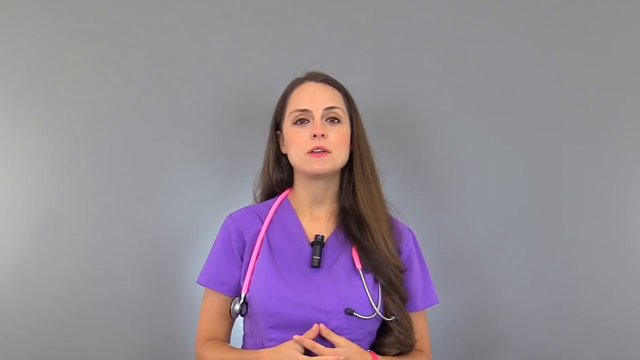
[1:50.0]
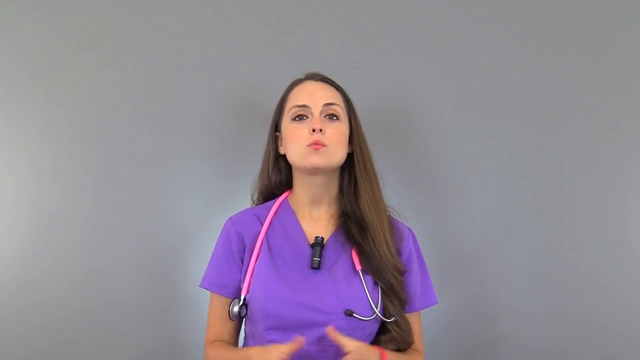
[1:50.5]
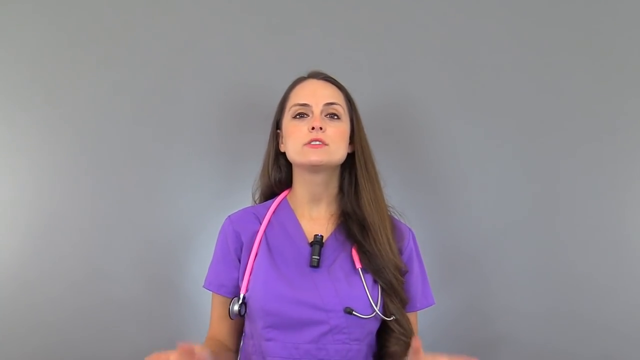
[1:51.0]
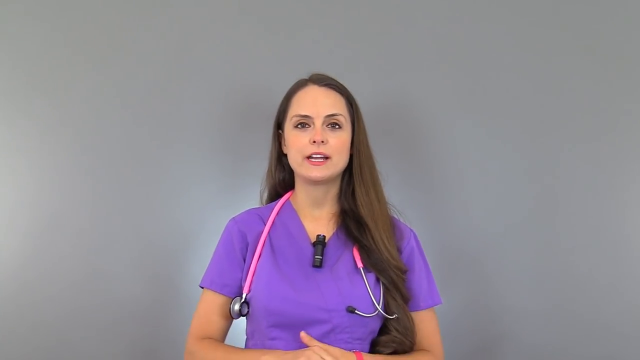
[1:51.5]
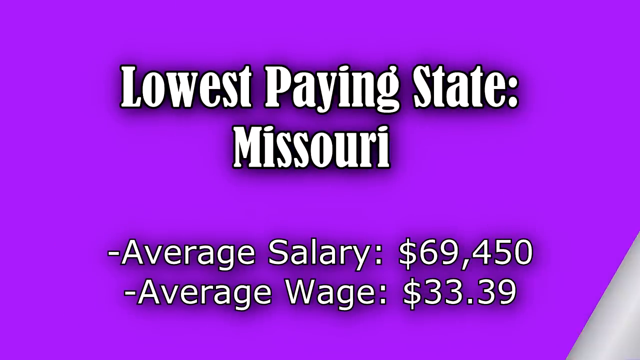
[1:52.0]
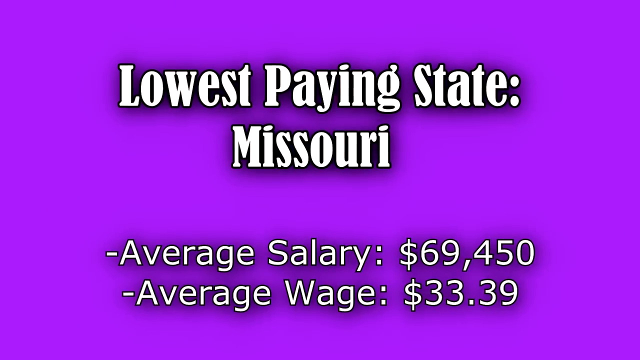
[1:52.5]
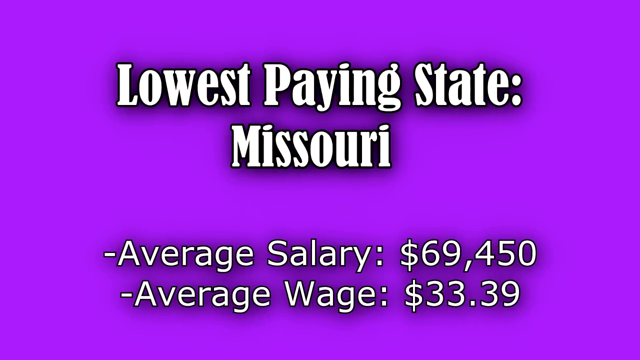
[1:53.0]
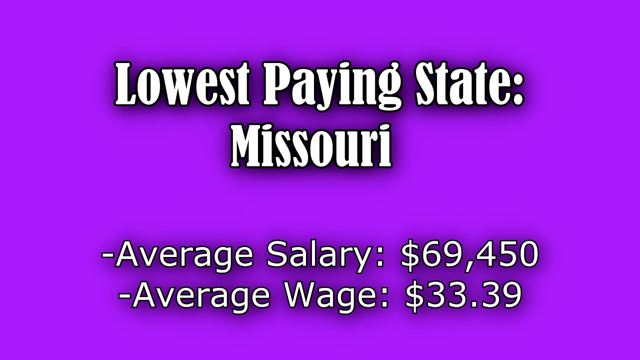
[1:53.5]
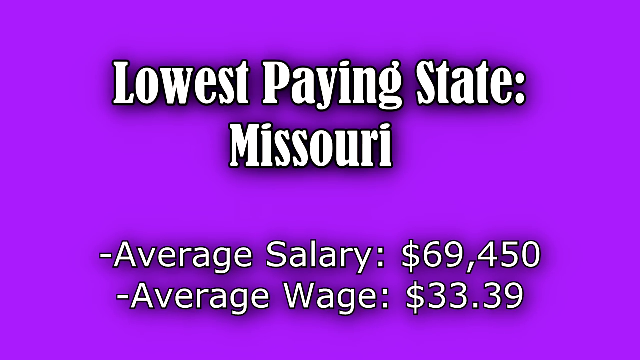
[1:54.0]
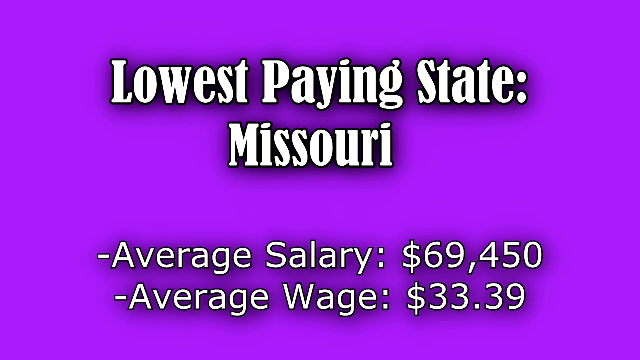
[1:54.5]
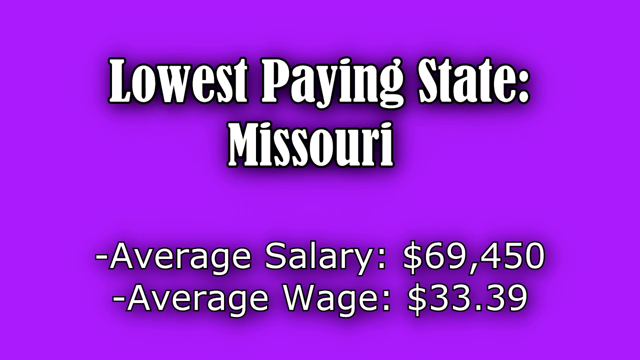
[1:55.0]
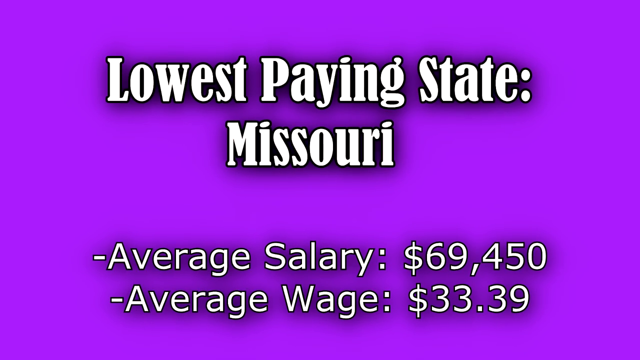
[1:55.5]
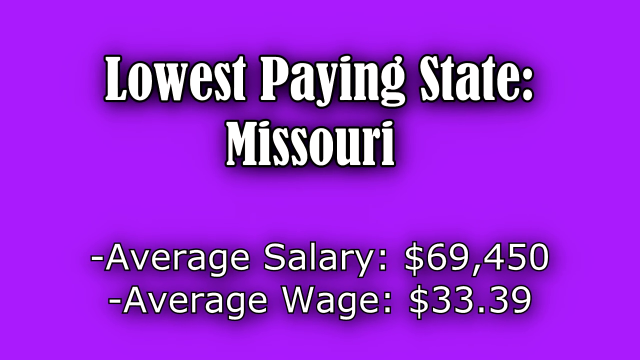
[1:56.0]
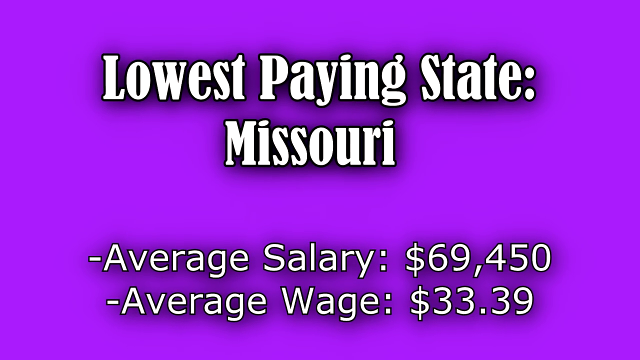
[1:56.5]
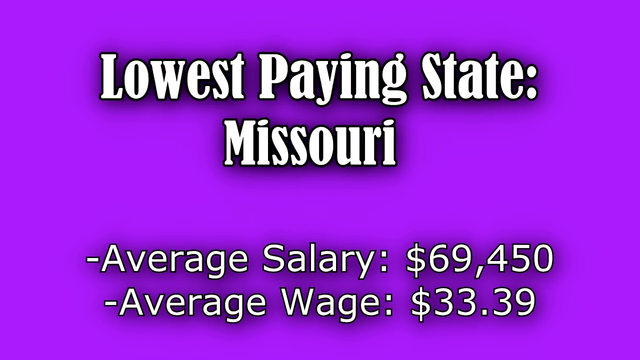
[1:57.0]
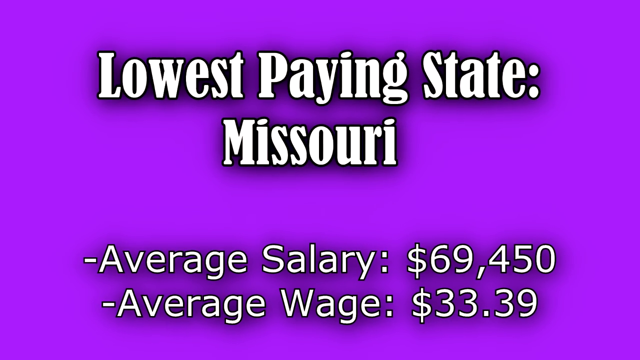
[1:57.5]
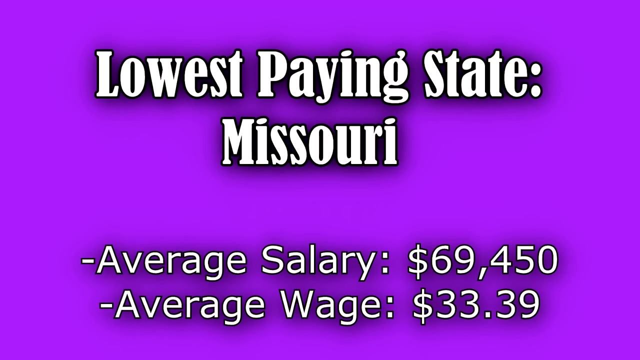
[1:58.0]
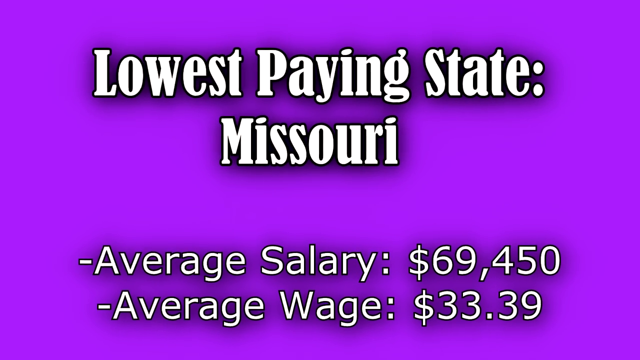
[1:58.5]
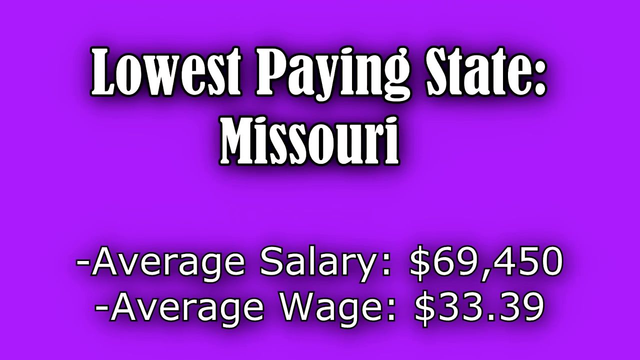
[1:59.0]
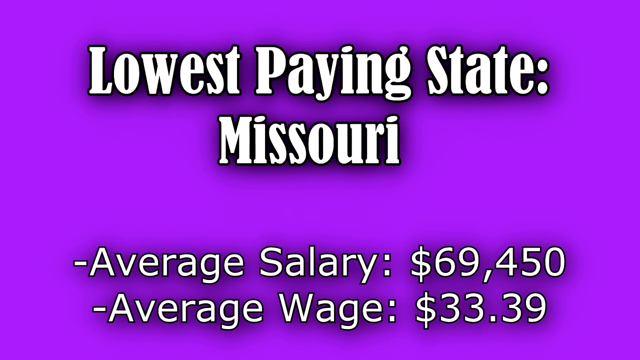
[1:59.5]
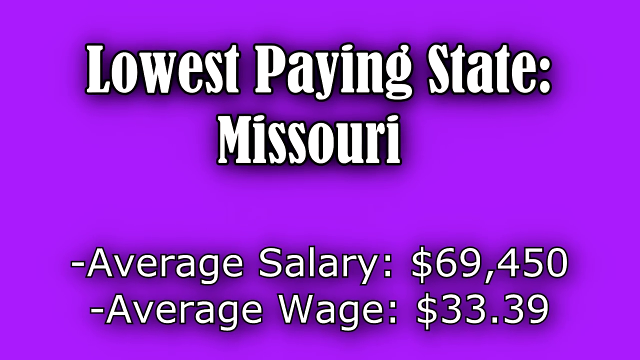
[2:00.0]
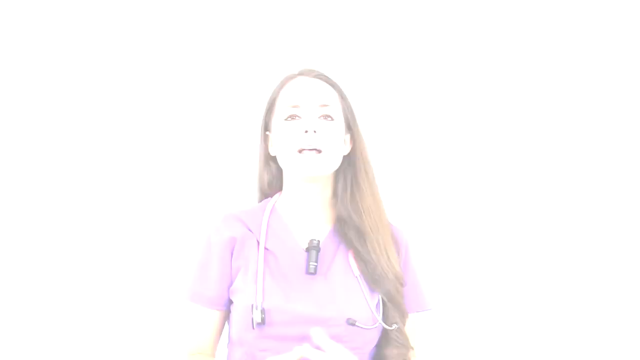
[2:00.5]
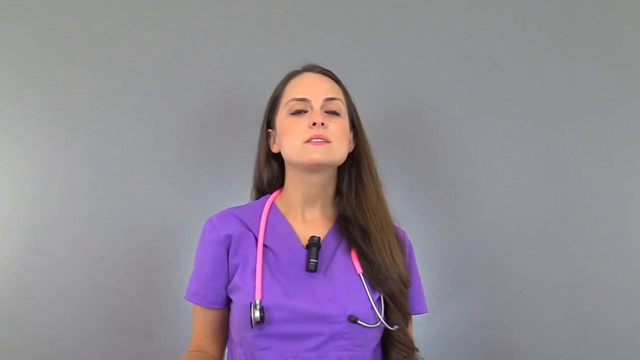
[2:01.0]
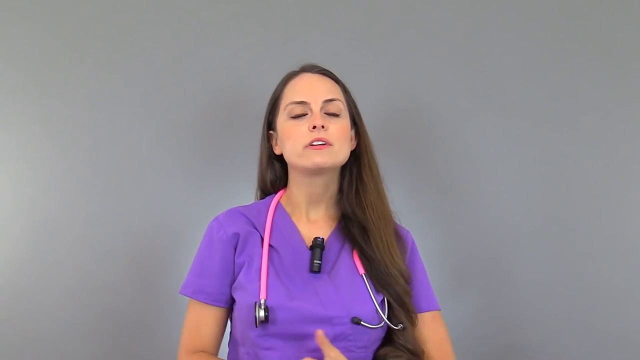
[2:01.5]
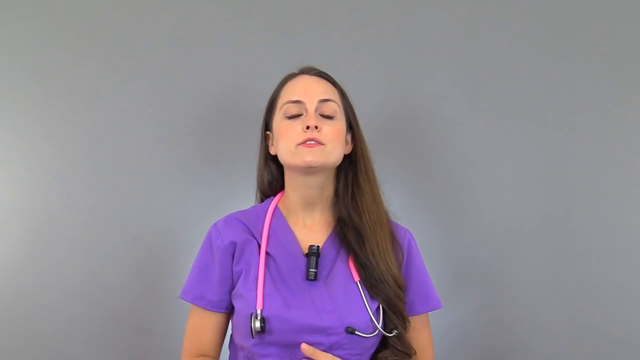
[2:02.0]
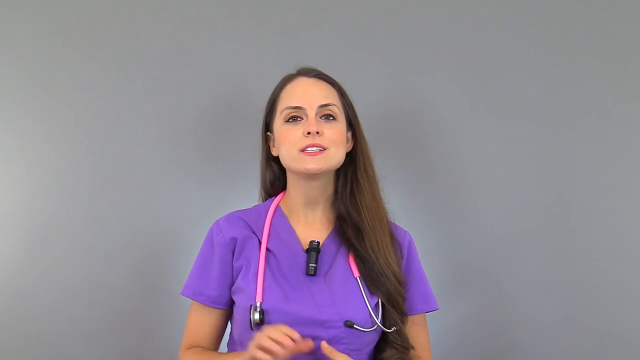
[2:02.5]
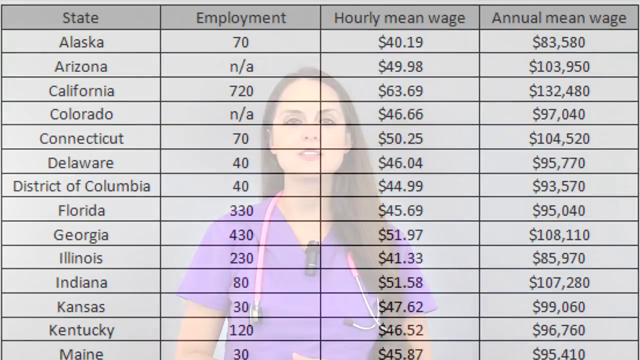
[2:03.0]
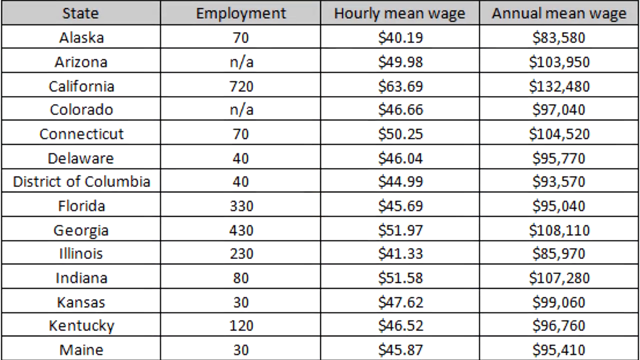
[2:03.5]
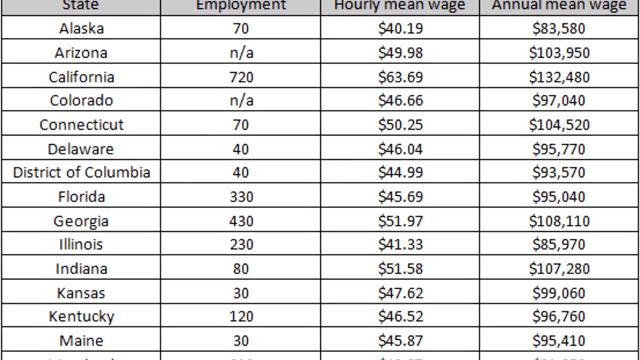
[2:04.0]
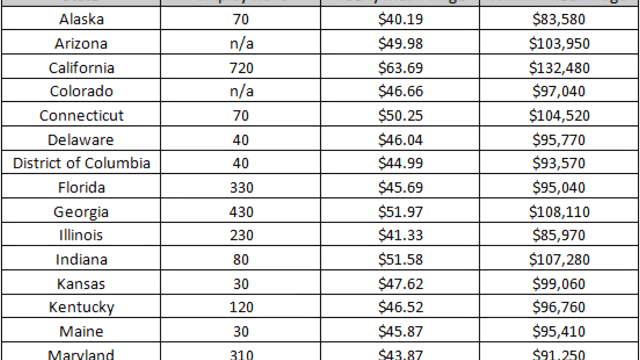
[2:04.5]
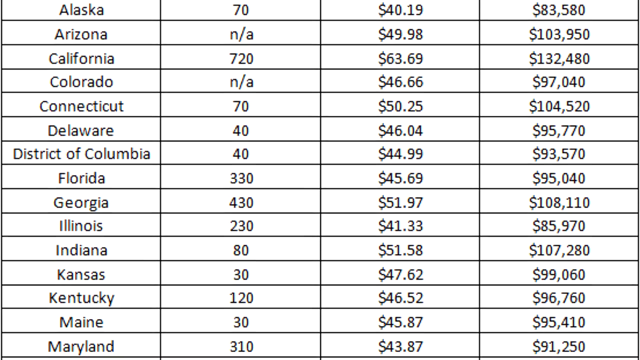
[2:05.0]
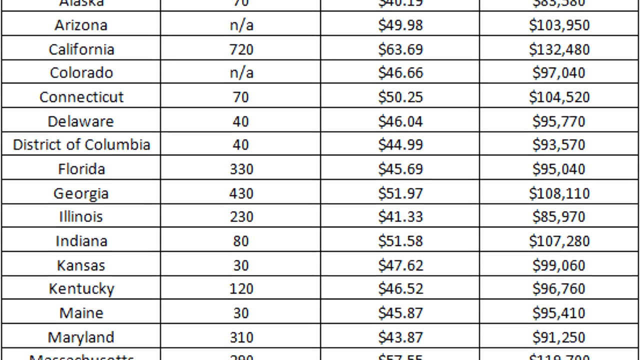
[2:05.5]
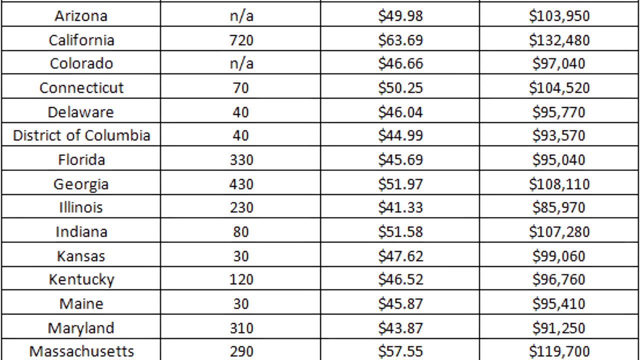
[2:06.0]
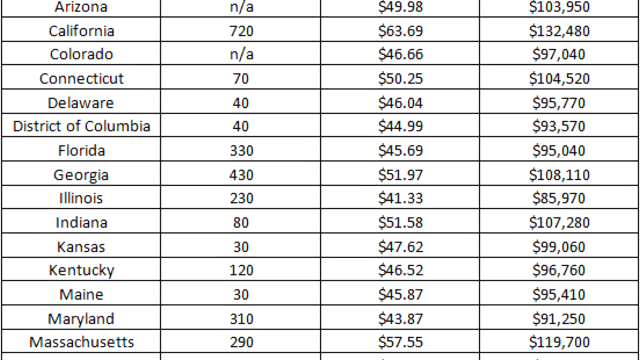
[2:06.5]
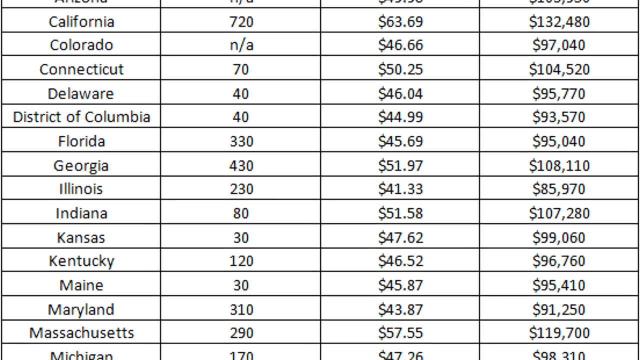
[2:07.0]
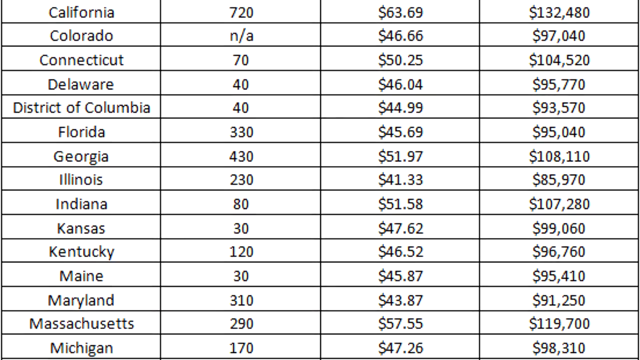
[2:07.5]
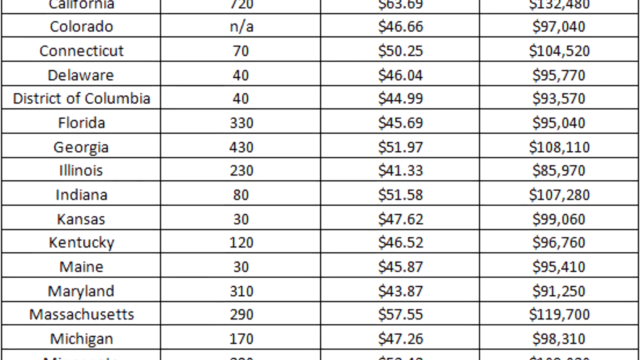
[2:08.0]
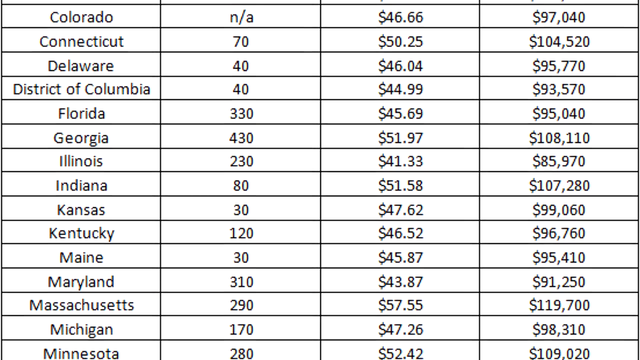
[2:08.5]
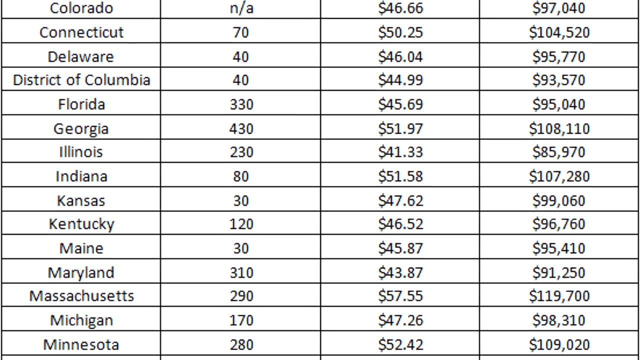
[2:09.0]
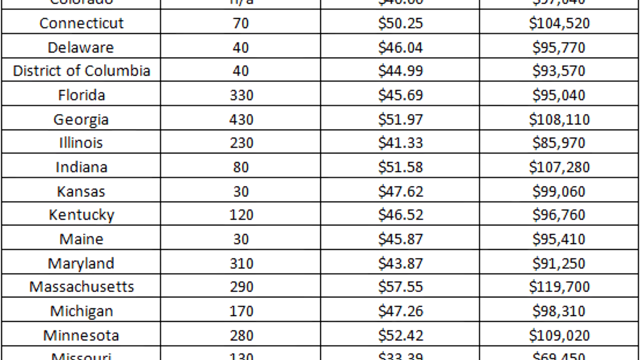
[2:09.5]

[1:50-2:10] The nurse, in a purple scrub top with a pink stethoscope, has long dark hair down to the middle of her back and Caucasian skin, and speaks toward the camera in front of a solid gray background. A purple page with white writing outlined in black follows, titled "lowest-paying state," with "Missouri" beneath it; the average salary is $69,450 and the average wage is $33.39. After about seven or eight seconds, the video flashes back to the full-screen nurse speaking against the gray background, her chin slightly raised. Then a data table appears listing each state's employment, hourly mean wage and annual mean wage. For instance, Delaware shows 40, an hourly wage of $44.99 and an annual wage of $93,570. The table goes through the states alphabetically.